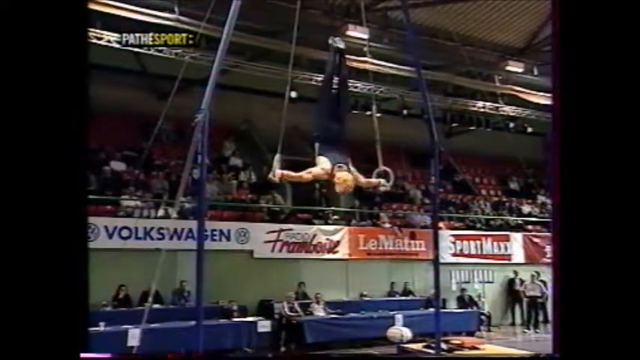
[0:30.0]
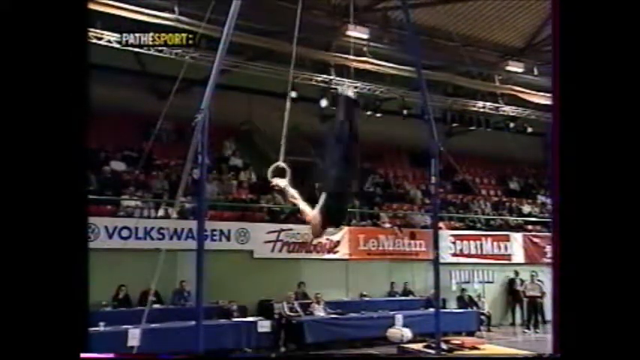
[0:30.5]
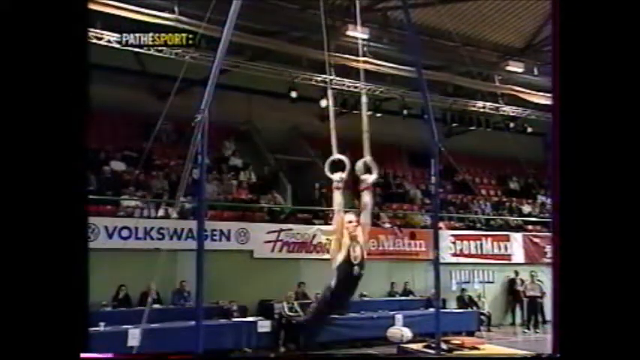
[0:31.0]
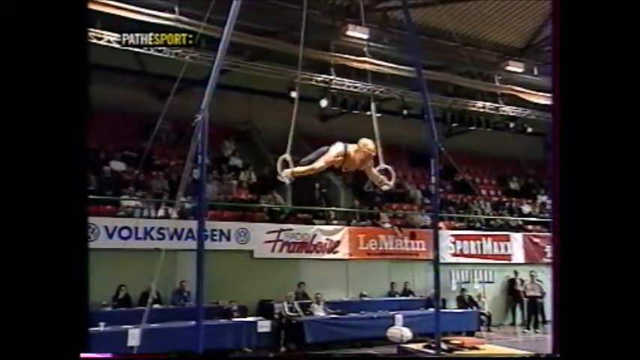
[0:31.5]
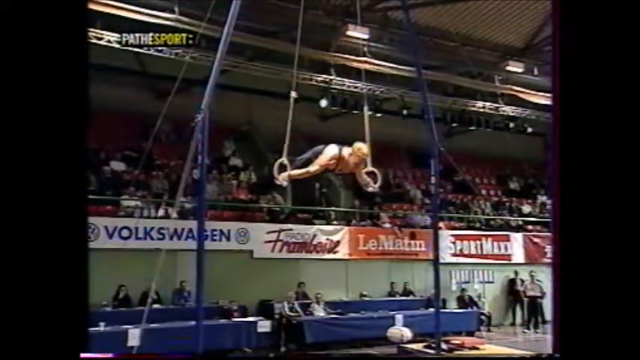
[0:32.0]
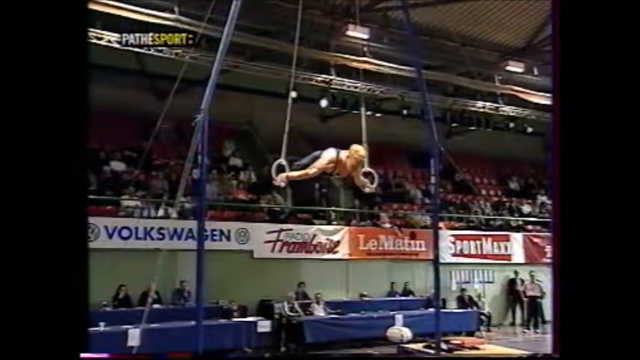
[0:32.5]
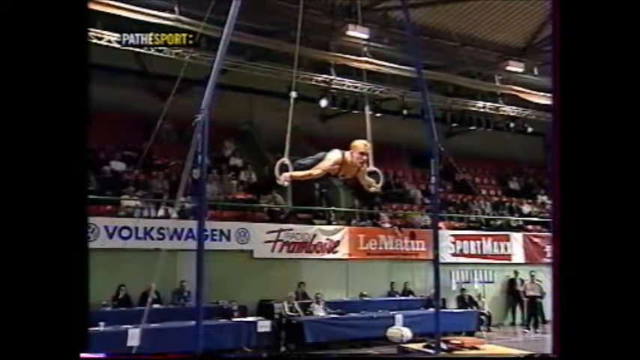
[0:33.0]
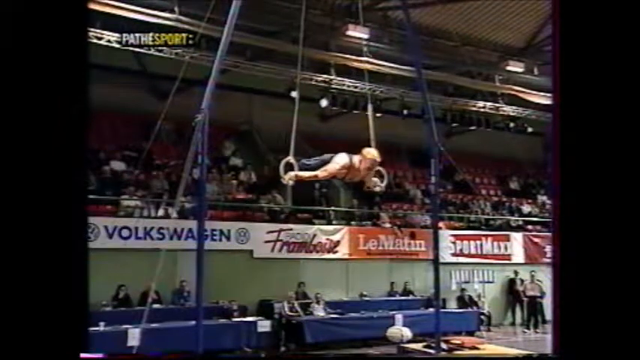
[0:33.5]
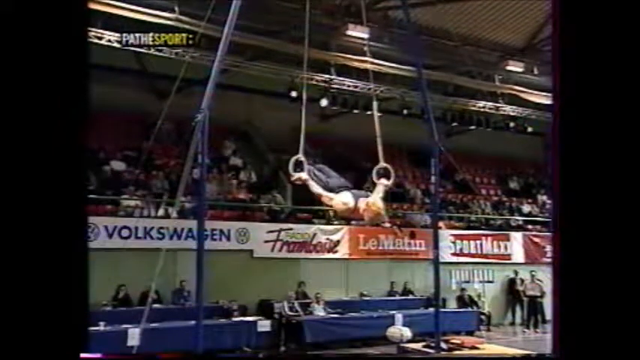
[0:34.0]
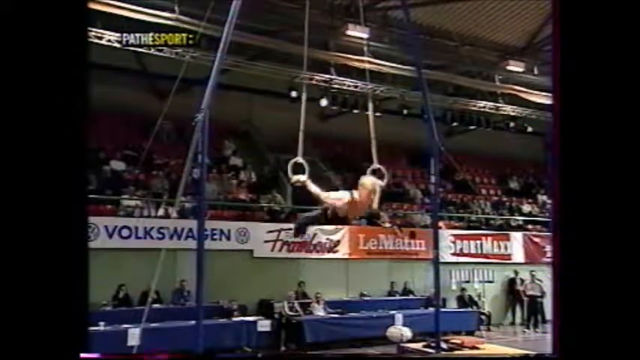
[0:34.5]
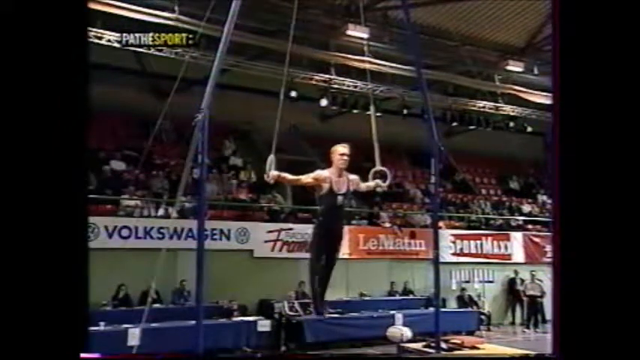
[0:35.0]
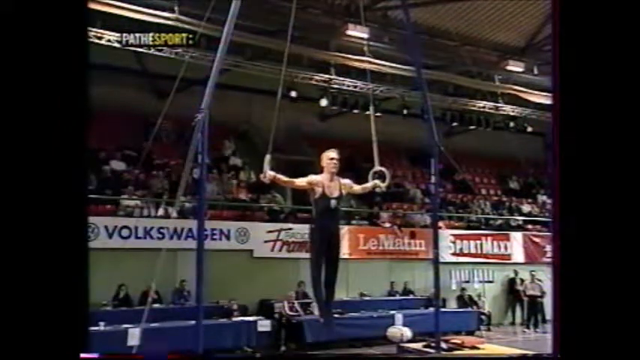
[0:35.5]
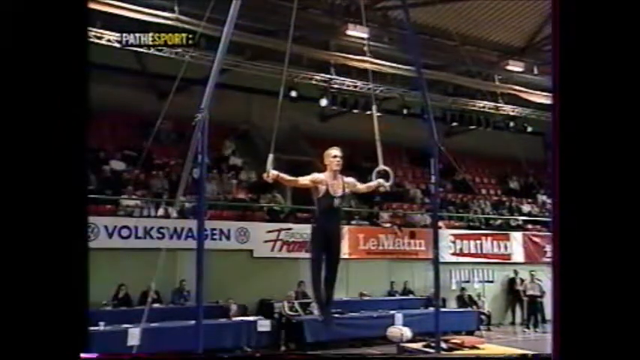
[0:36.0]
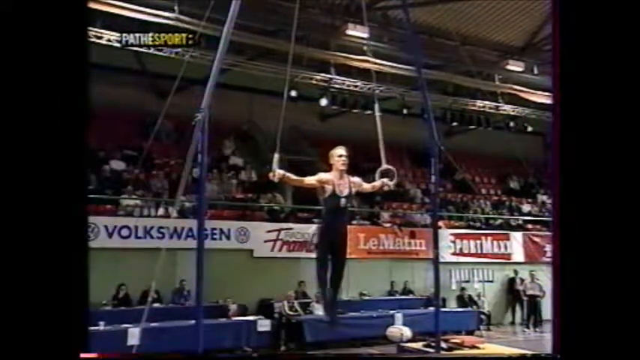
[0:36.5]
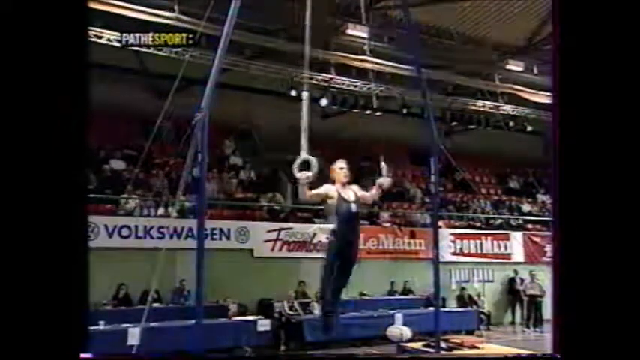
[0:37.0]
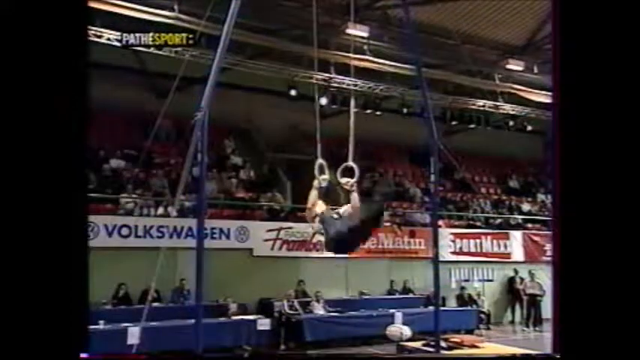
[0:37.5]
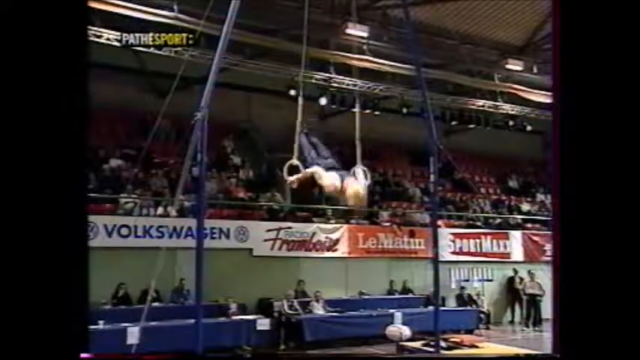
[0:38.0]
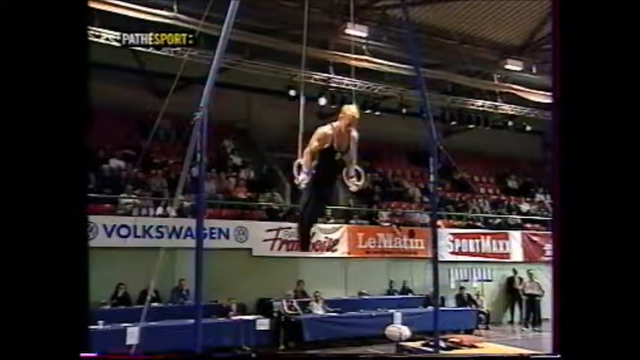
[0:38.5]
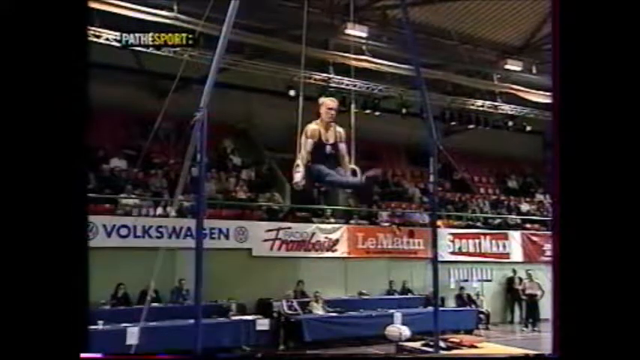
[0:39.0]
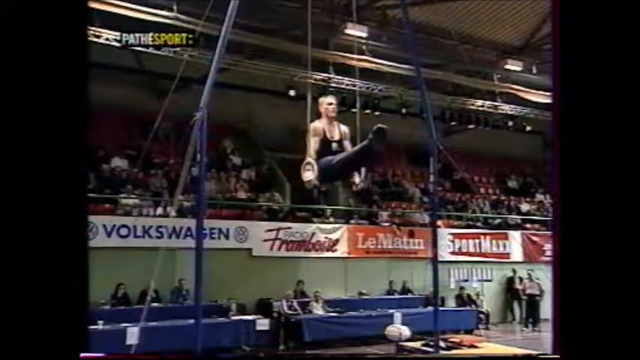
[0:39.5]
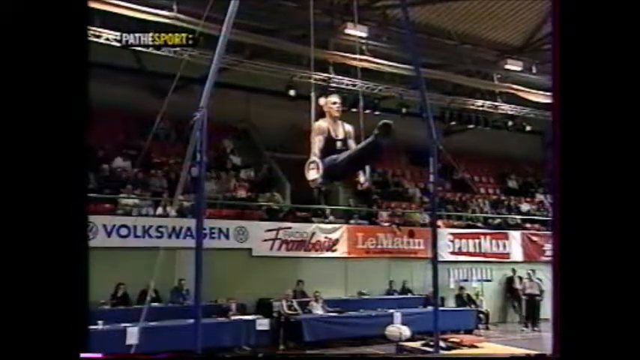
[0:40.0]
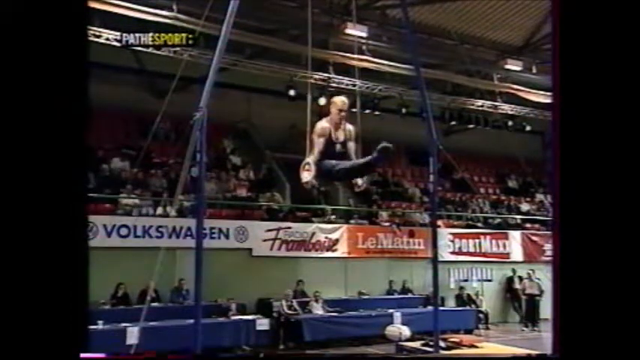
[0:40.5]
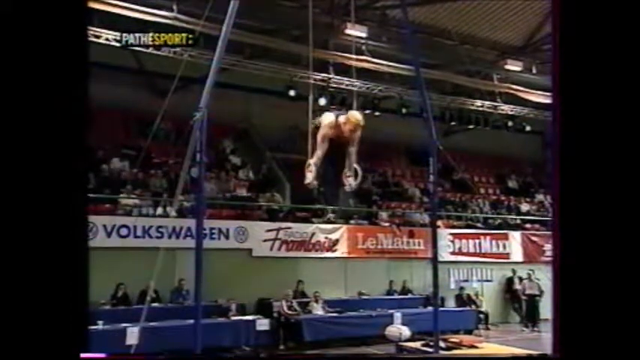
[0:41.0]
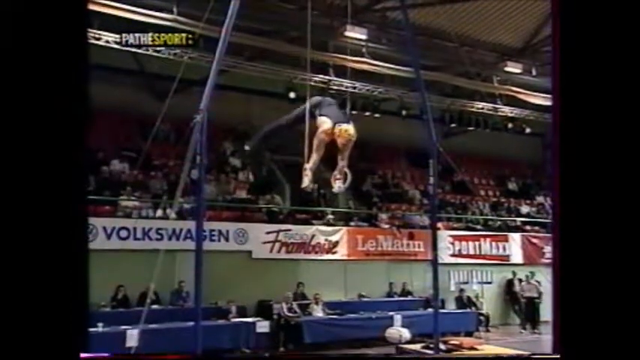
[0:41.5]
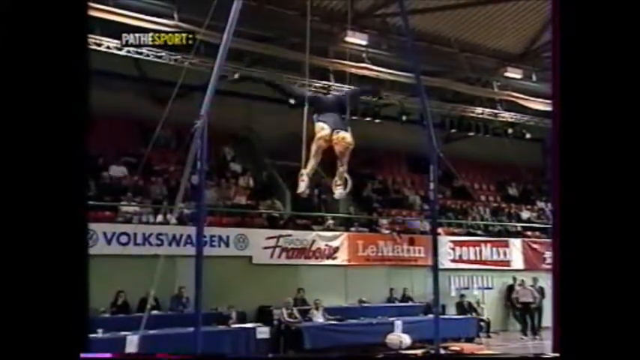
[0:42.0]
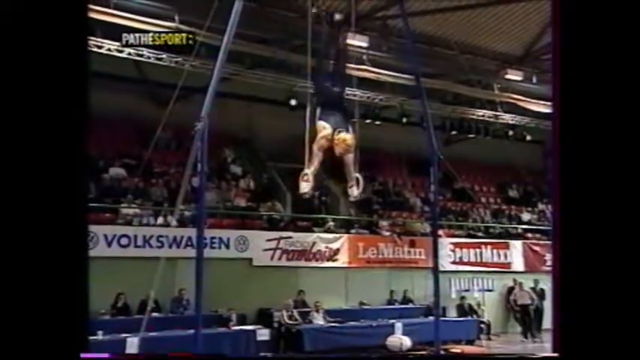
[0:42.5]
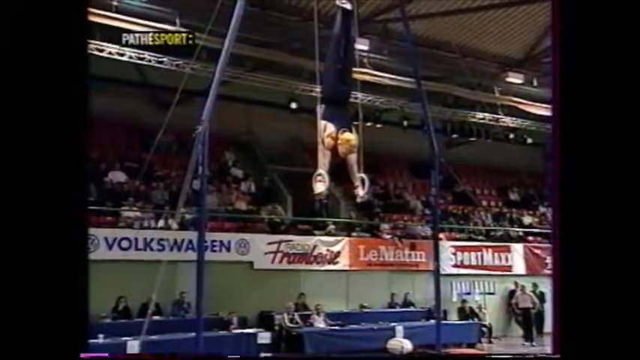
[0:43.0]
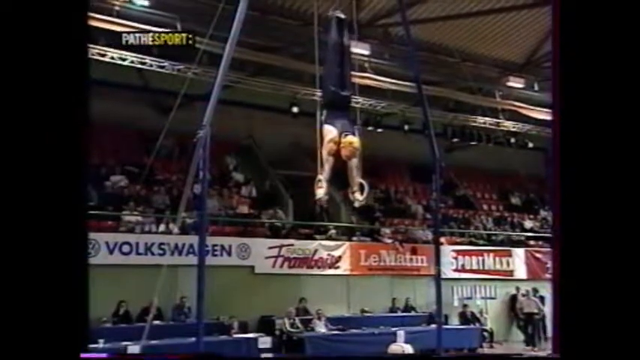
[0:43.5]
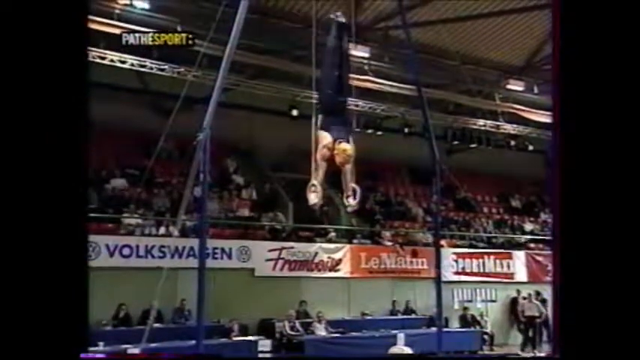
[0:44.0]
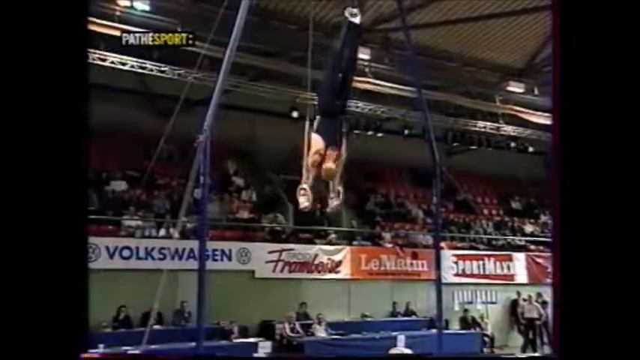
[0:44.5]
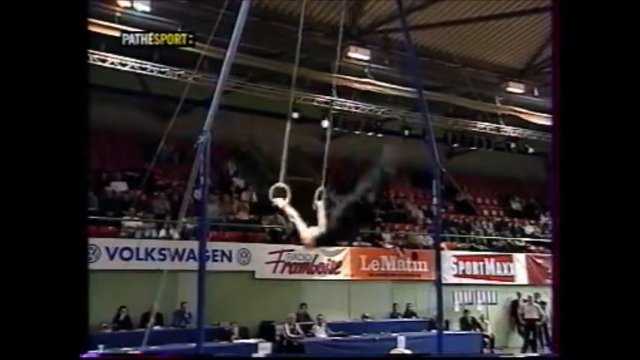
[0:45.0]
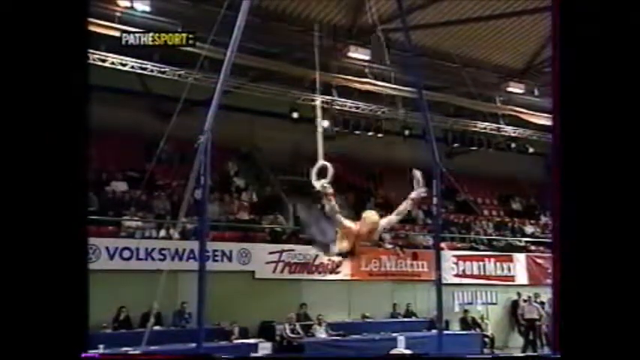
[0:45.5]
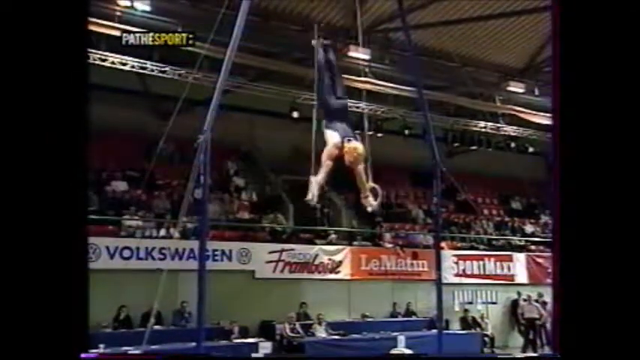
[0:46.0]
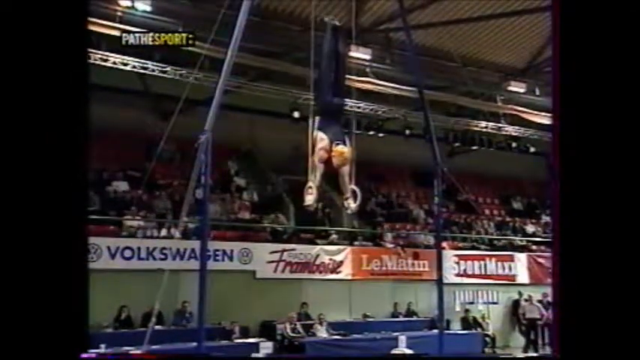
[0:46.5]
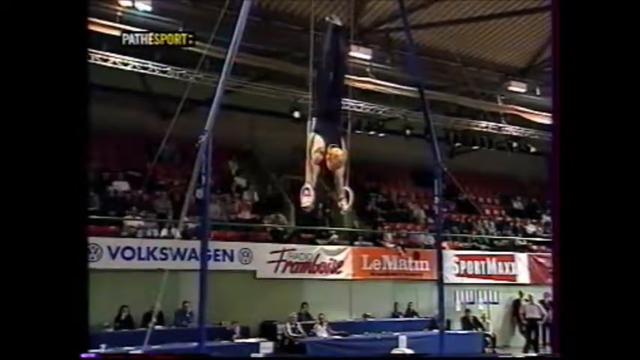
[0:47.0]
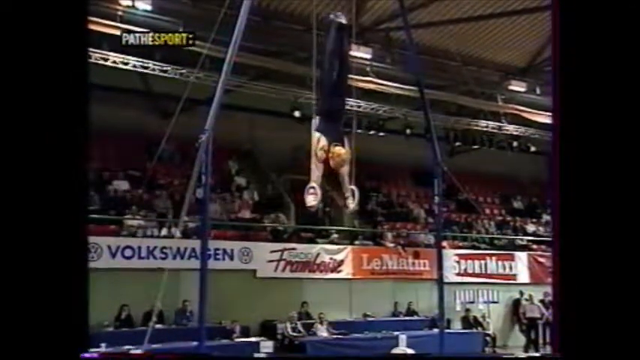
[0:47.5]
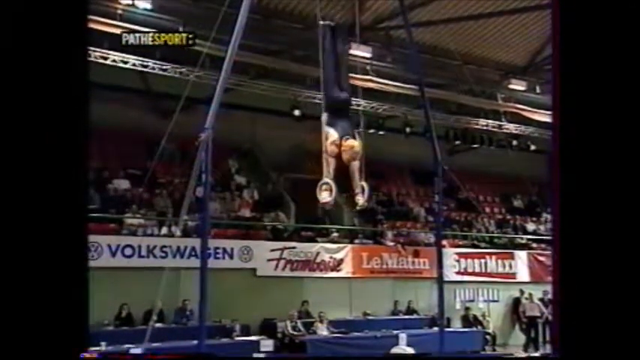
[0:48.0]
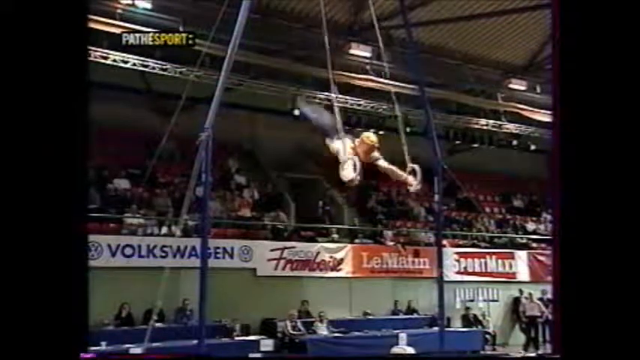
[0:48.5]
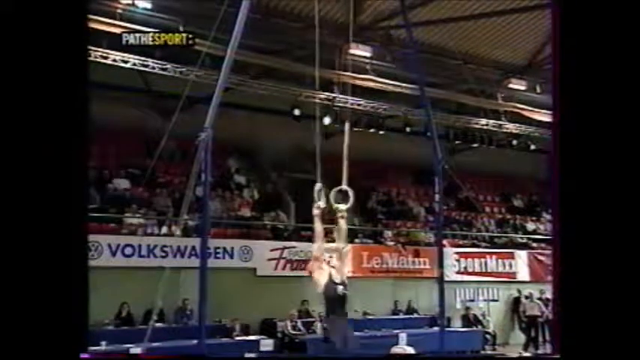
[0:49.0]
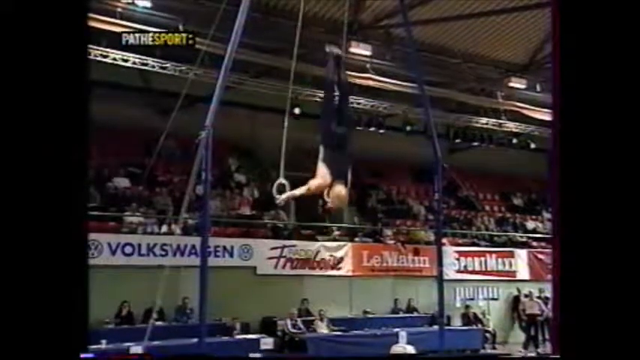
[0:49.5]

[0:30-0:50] The same gymnast is shown from the same shot and angle, with the same advertisements. He is in his early 20s, very muscular, with reddish blonde hair, wearing a blue gymnastics outfit that shows all his muscles. He starts looking down in the air with his legs up, perfectly straight, then swings down, his legs swinging to the front, and looks down again. He holds himself up at a 90-degree angle, looking down and then up, then goes straight down, pulls himself around, flips over, and swings his leg through, so he is looking forward with his legs straight out. He pulls his legs up and looks like he is doing a handstand while holding the rings, legs perfectly straight up. He swings around again with his legs straight up.